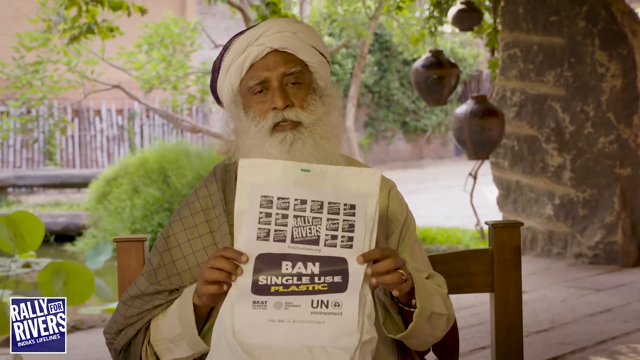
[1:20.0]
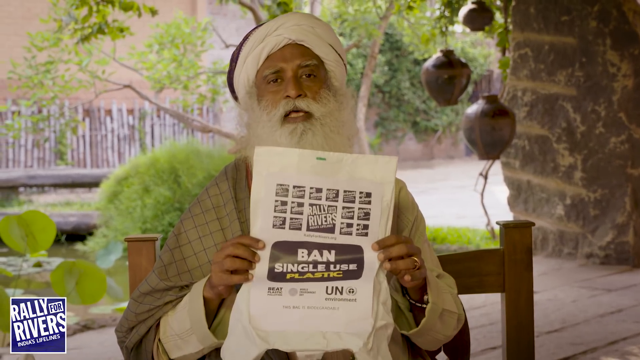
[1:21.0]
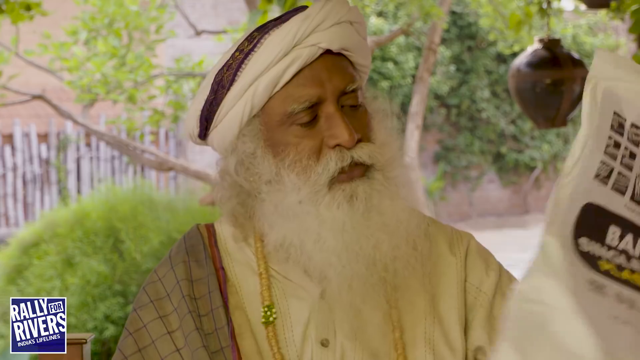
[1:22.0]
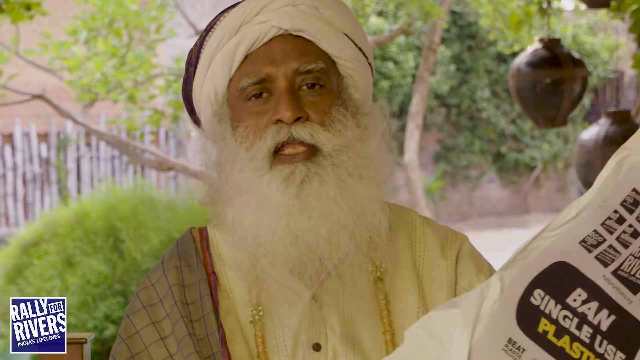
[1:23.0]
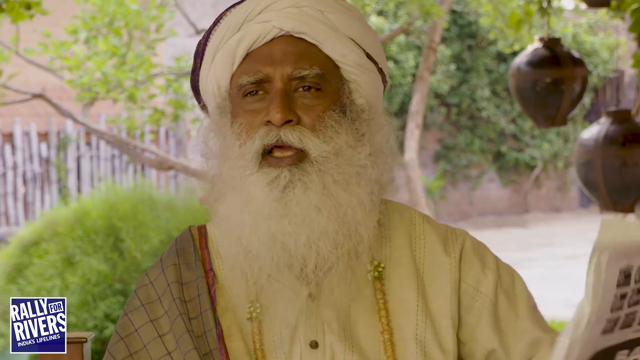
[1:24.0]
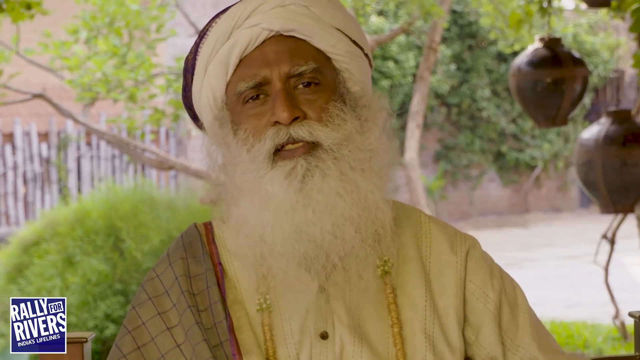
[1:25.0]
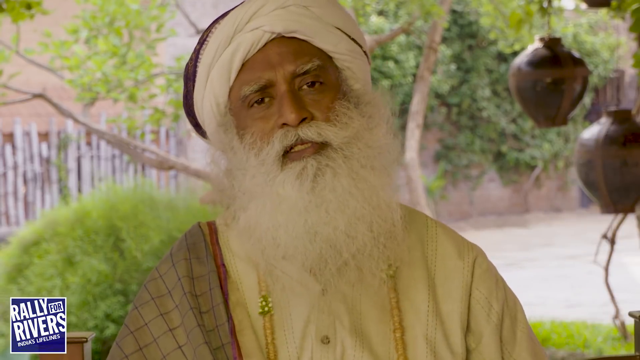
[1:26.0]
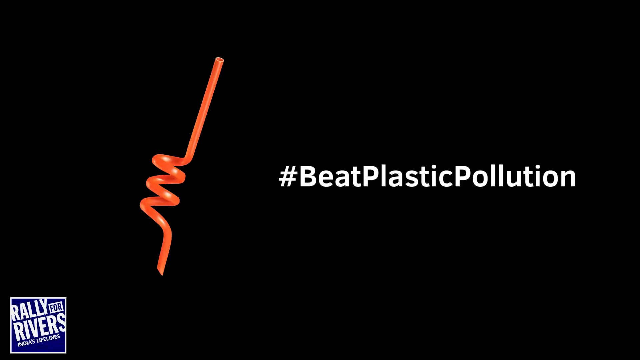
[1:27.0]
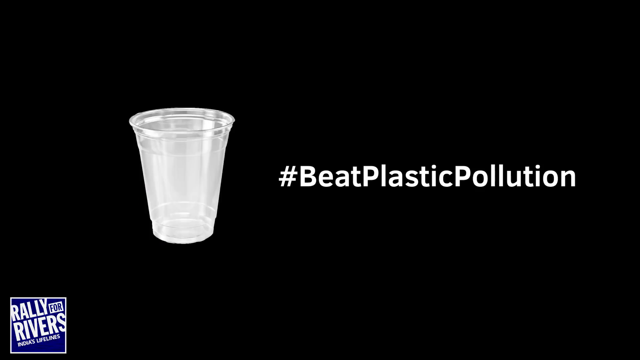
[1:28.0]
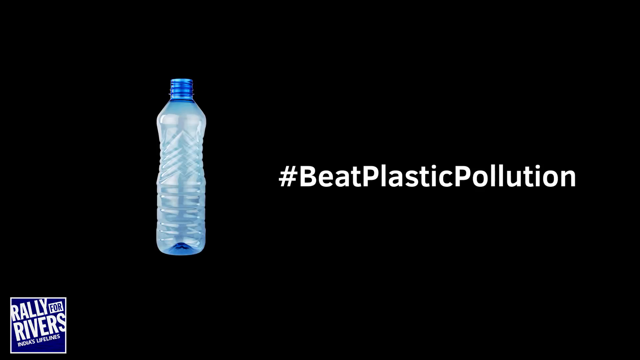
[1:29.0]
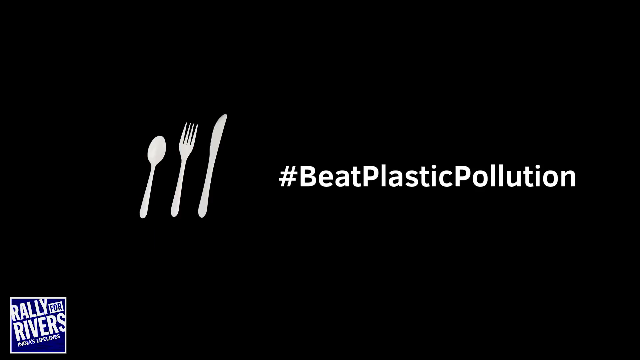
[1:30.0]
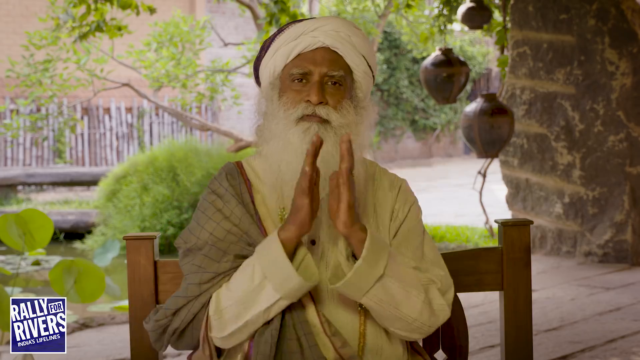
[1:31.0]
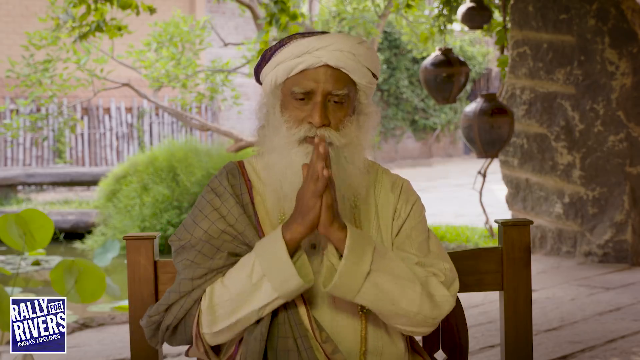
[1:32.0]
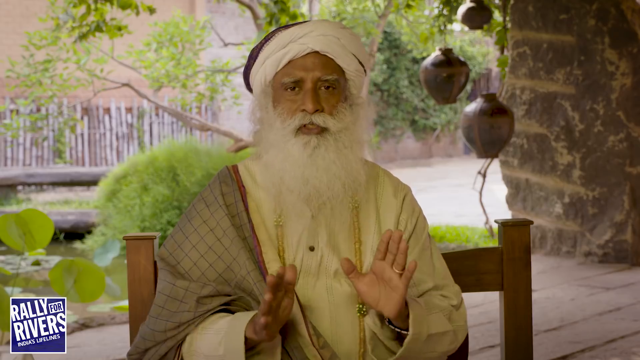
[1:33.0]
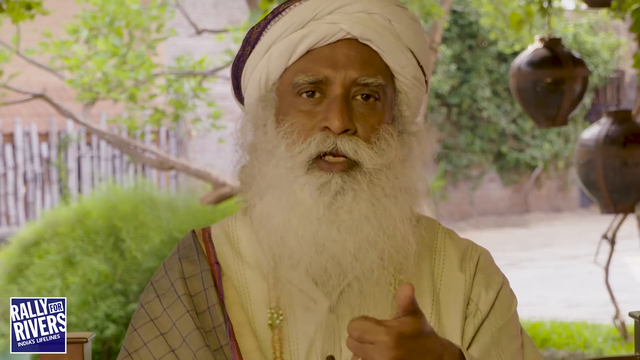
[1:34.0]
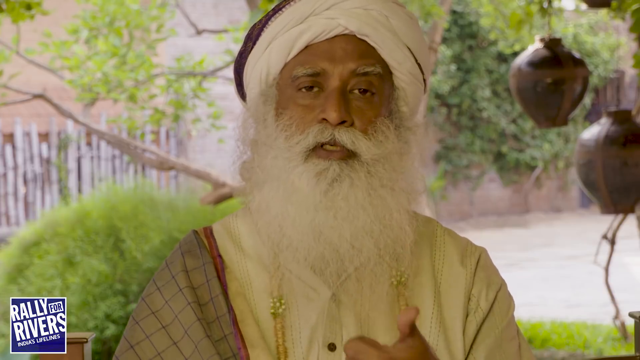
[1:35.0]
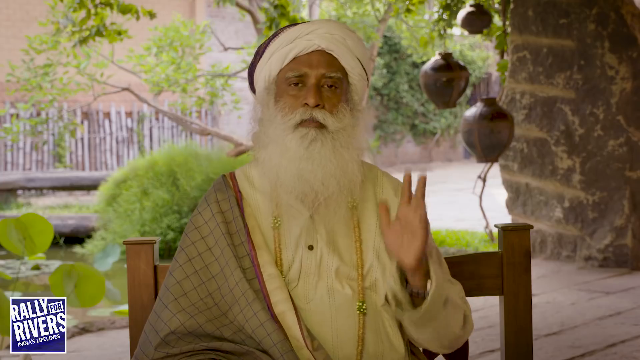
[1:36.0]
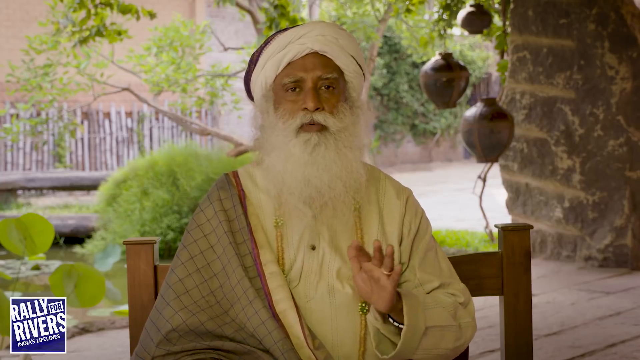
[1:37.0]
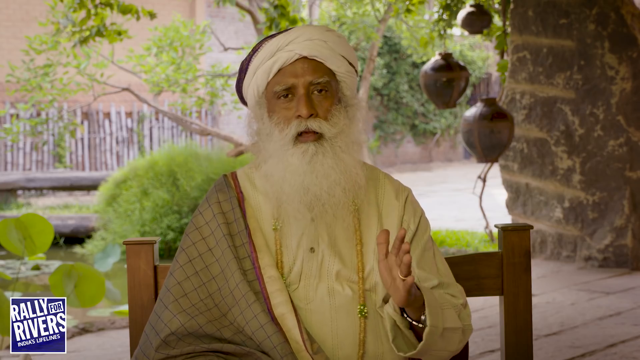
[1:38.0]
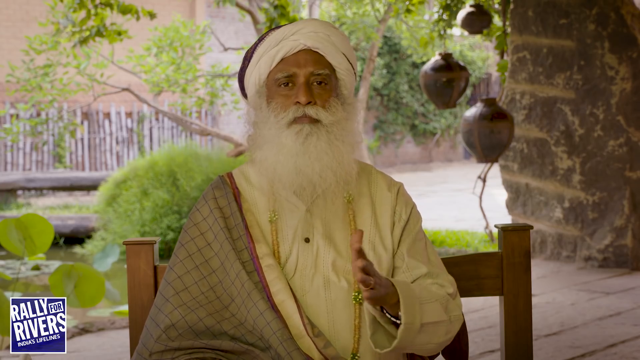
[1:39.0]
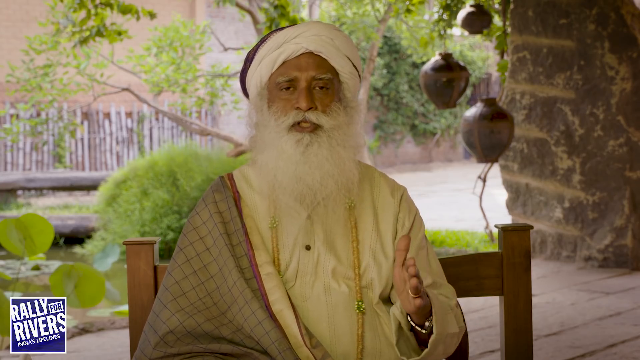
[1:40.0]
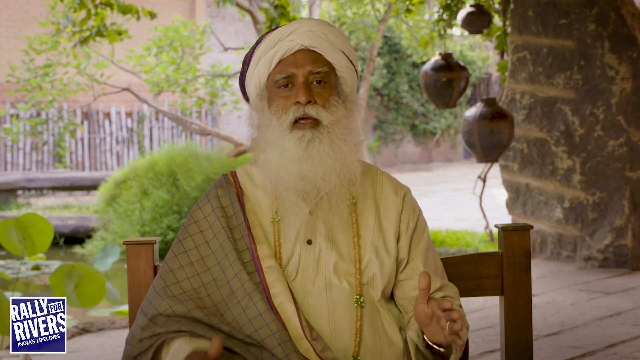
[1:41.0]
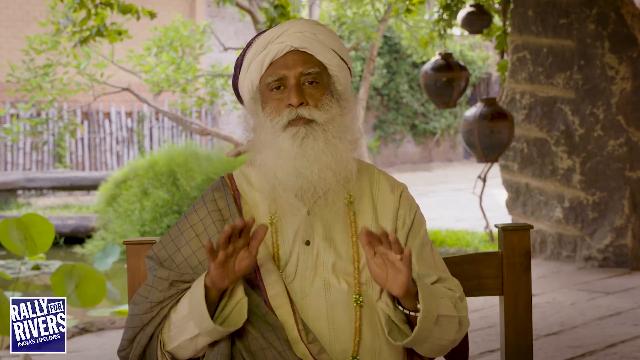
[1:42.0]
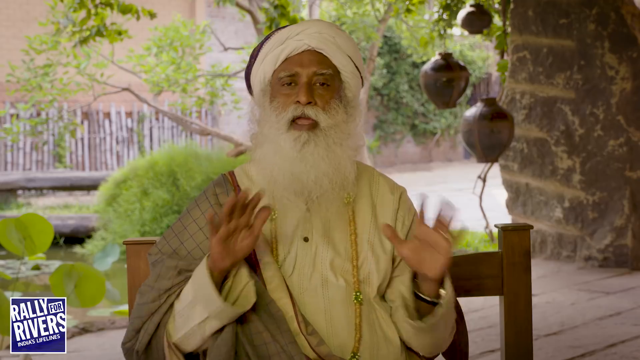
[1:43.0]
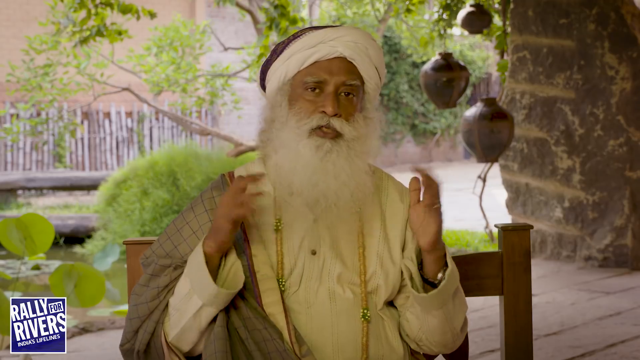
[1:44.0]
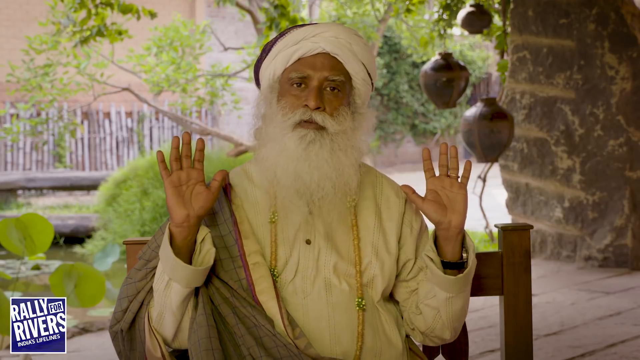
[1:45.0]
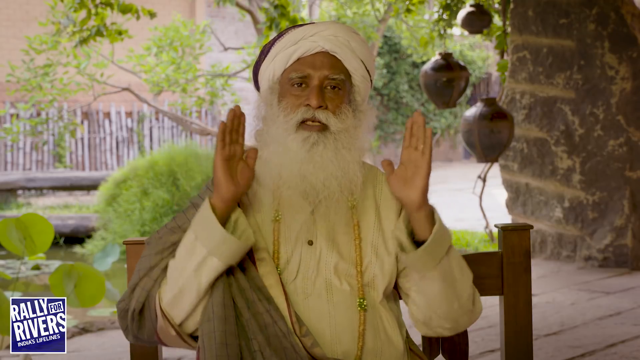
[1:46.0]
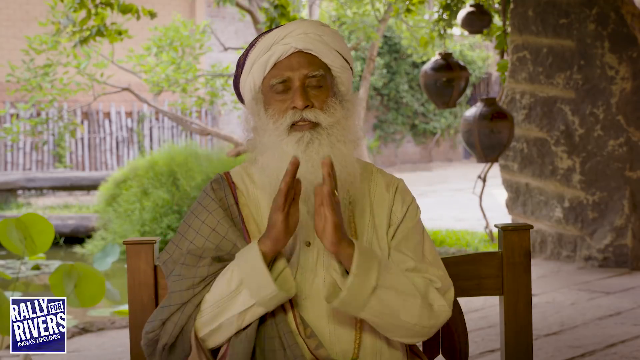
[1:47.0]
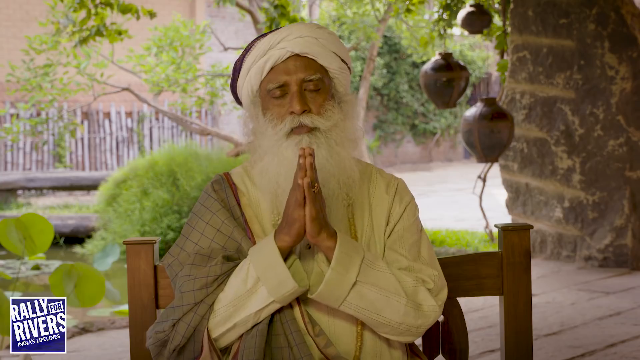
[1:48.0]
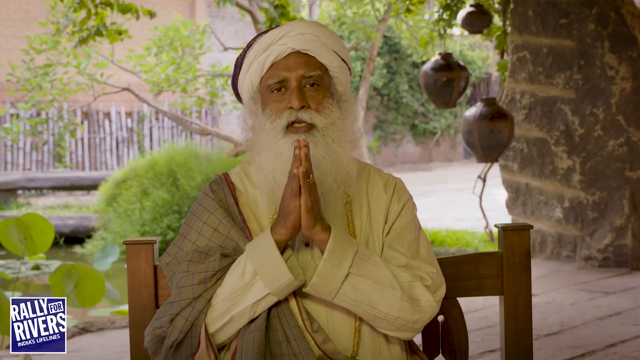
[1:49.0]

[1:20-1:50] The Indian man talks into the camera. The video then shows a picture of plastic items, including plastic cups and plastic bags, with "#BeatPlasticPollution" on the right side of the screen. The man is then shown still speaking.